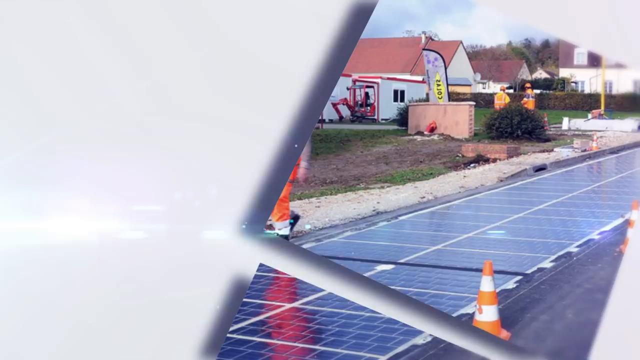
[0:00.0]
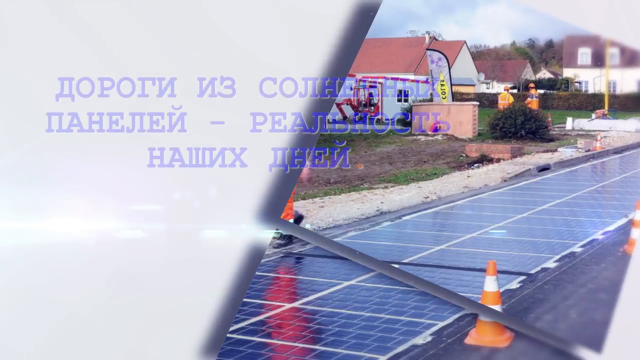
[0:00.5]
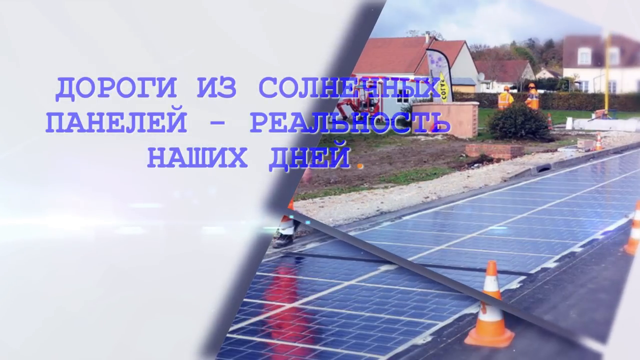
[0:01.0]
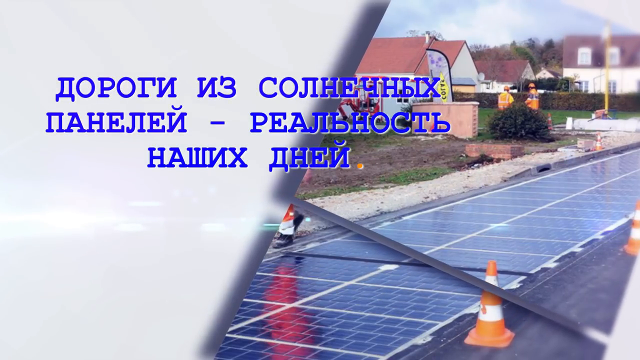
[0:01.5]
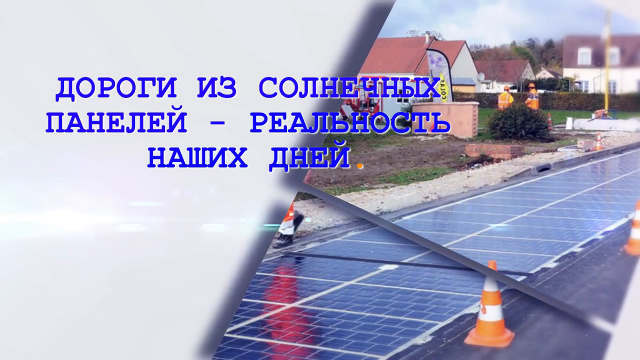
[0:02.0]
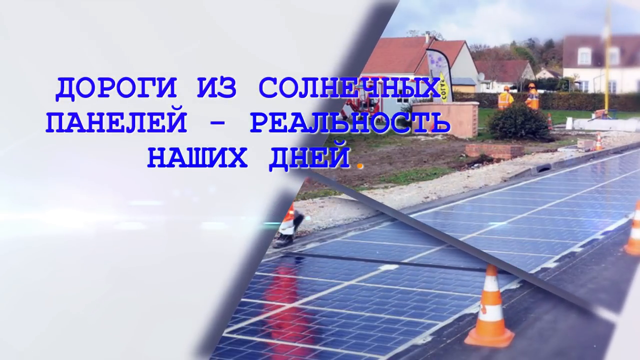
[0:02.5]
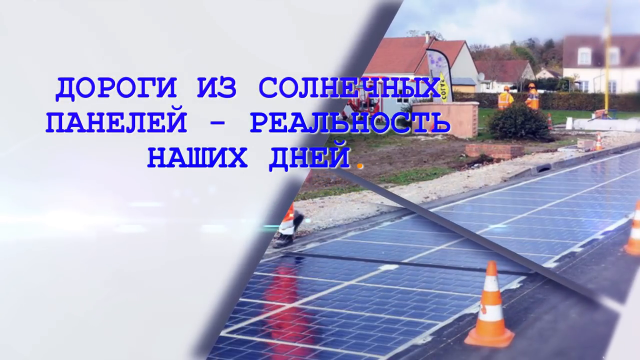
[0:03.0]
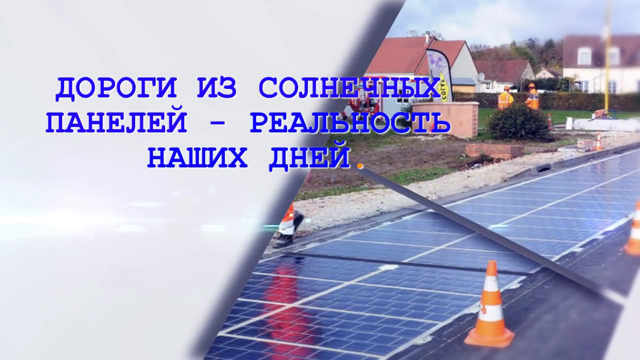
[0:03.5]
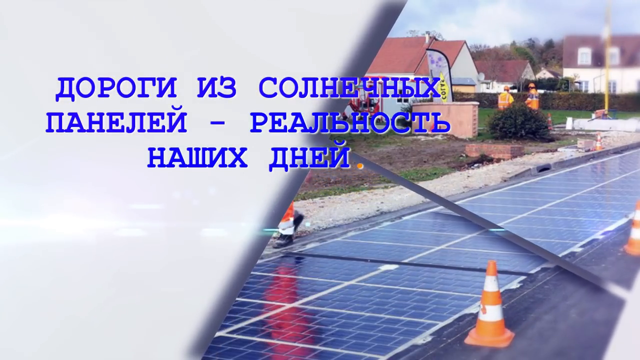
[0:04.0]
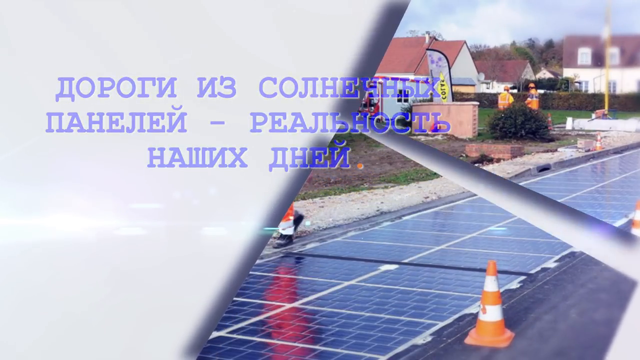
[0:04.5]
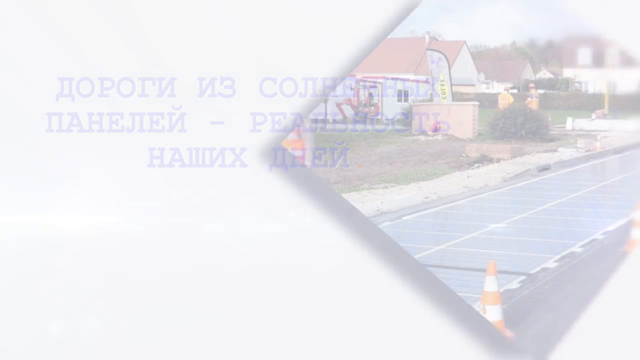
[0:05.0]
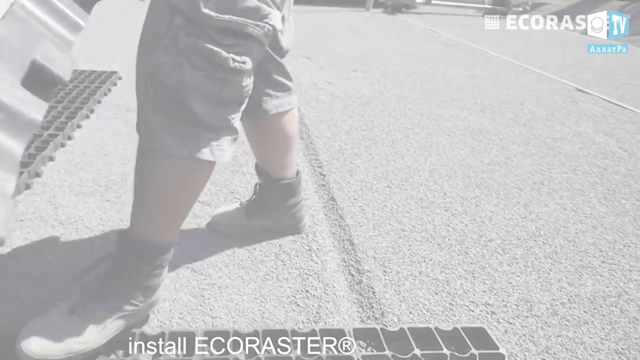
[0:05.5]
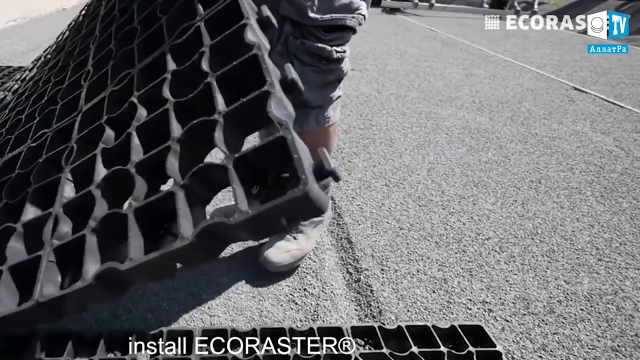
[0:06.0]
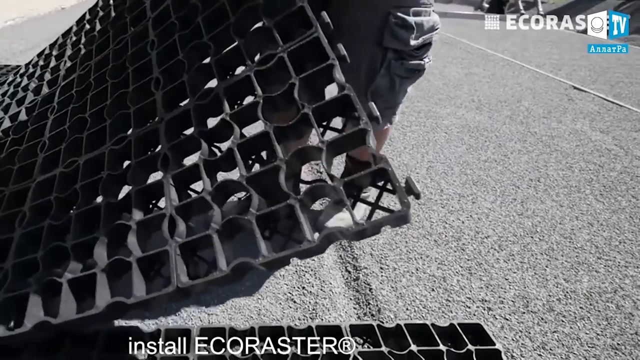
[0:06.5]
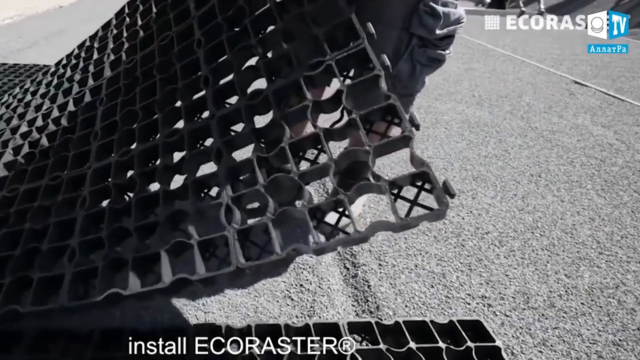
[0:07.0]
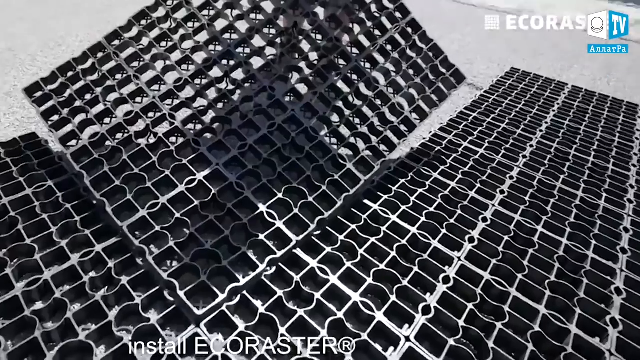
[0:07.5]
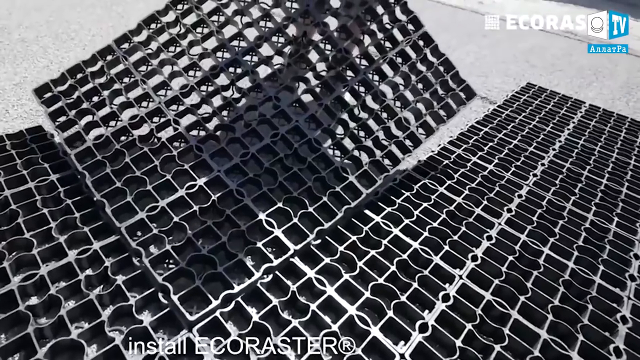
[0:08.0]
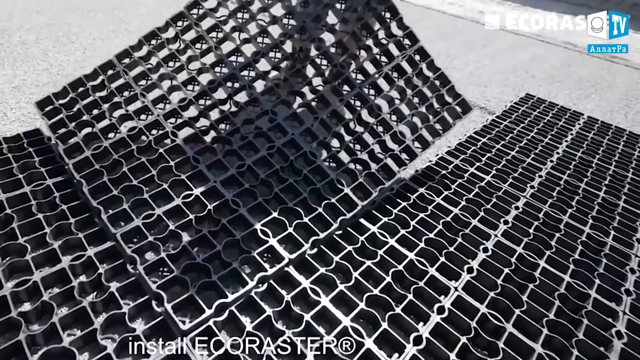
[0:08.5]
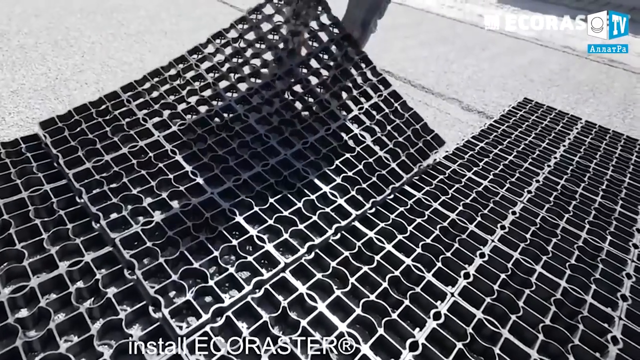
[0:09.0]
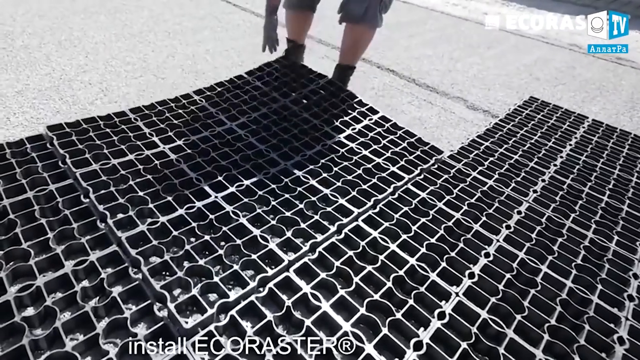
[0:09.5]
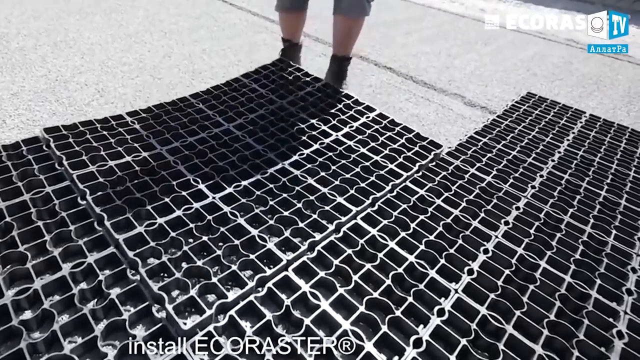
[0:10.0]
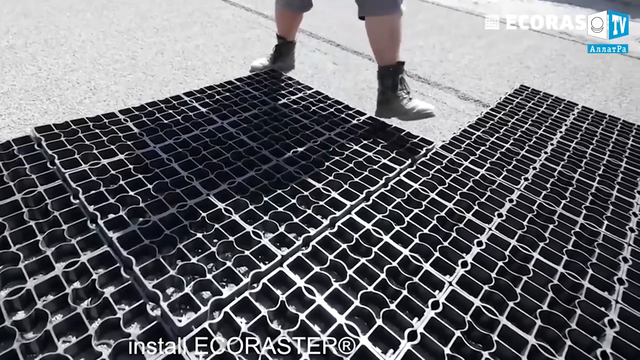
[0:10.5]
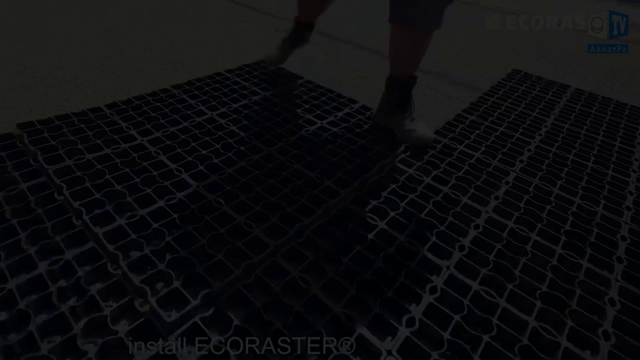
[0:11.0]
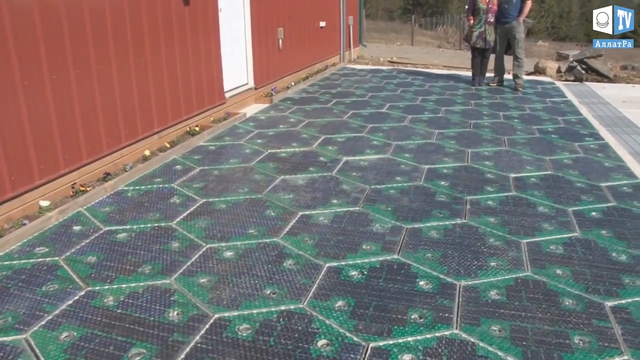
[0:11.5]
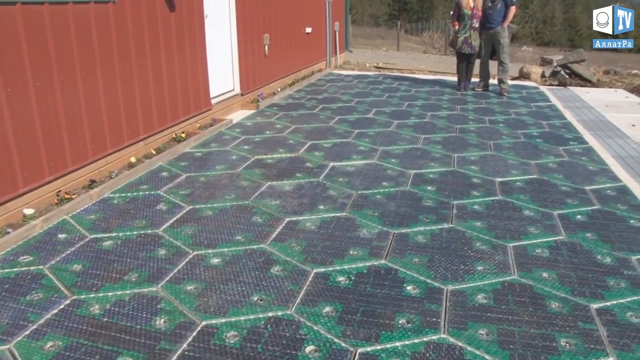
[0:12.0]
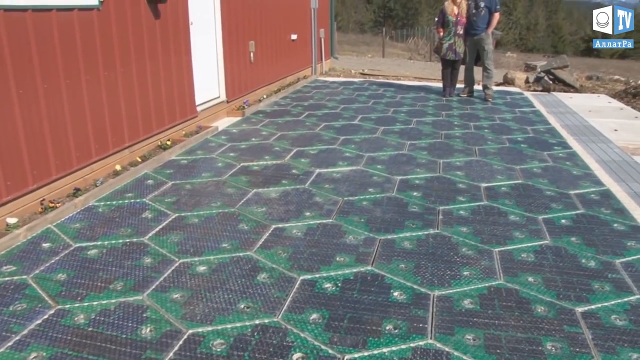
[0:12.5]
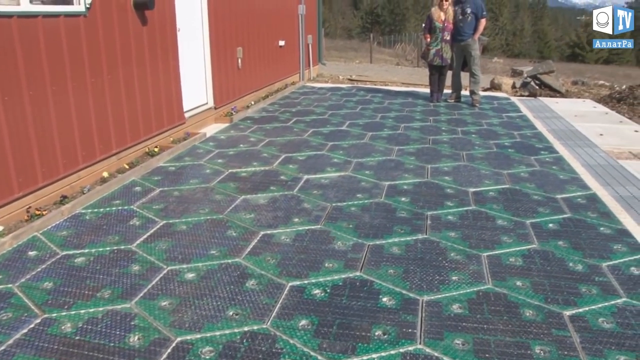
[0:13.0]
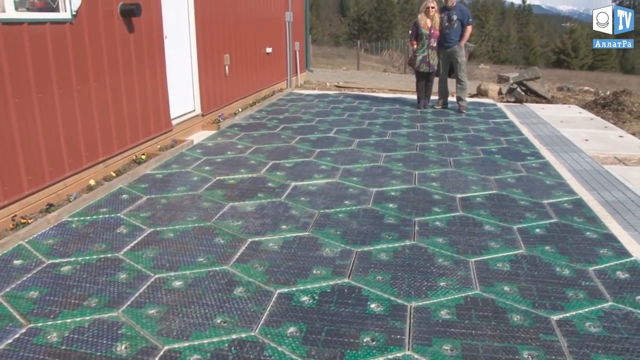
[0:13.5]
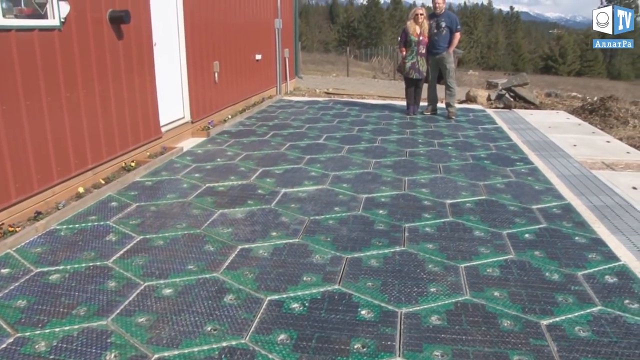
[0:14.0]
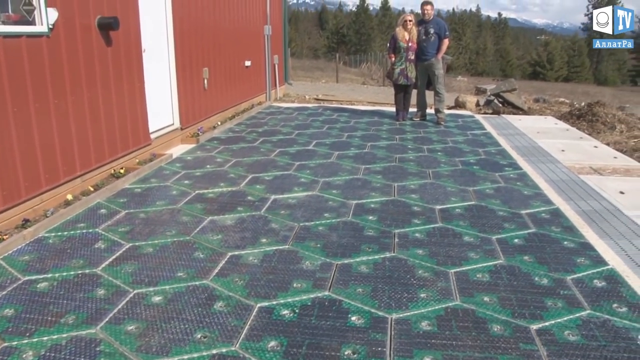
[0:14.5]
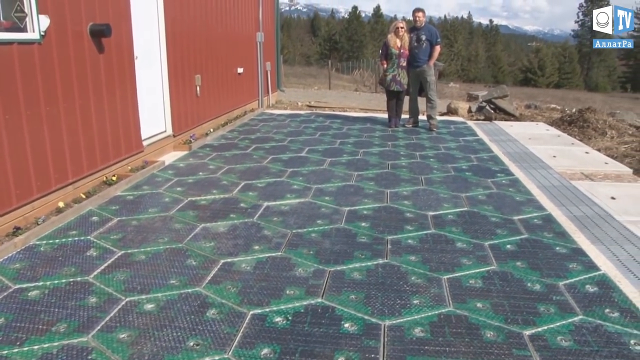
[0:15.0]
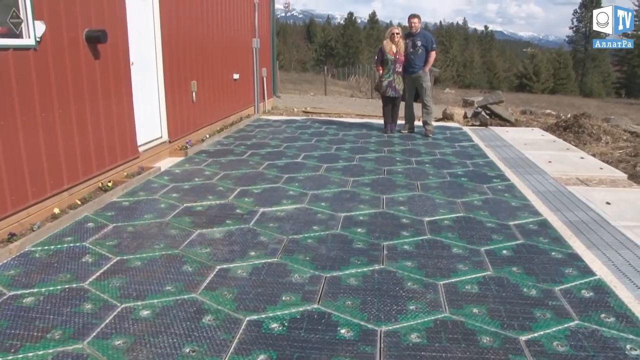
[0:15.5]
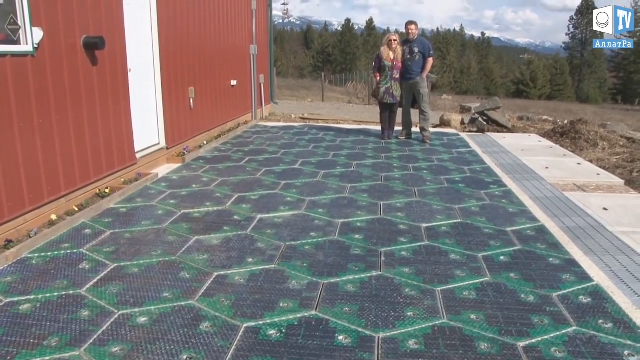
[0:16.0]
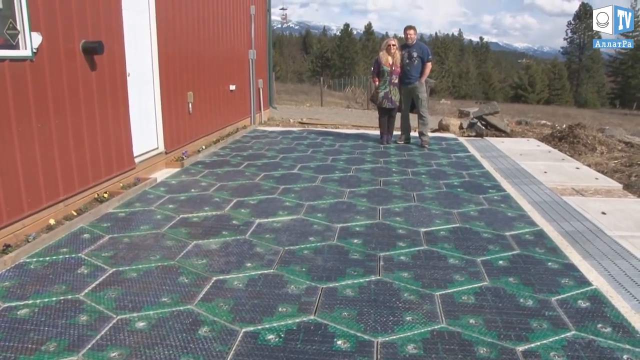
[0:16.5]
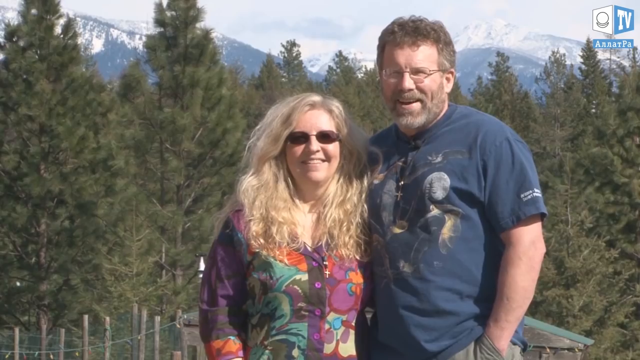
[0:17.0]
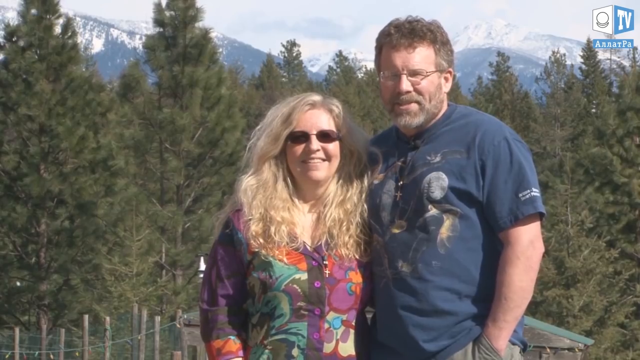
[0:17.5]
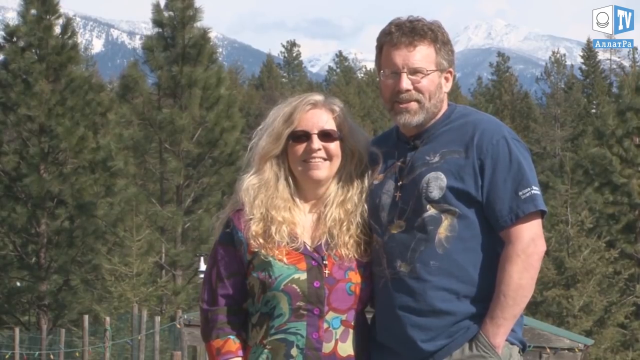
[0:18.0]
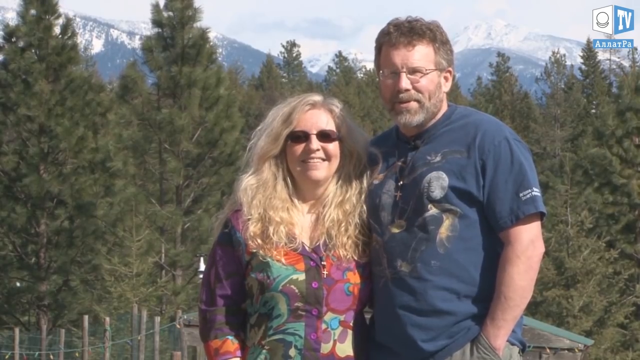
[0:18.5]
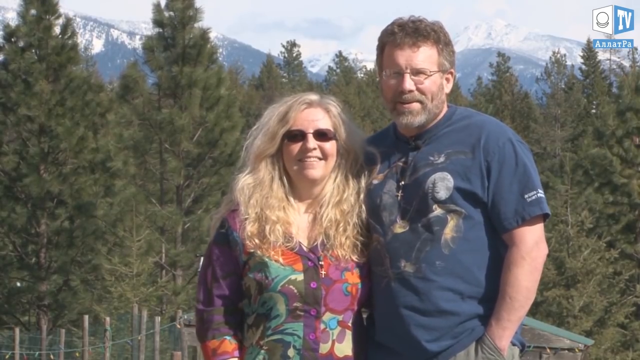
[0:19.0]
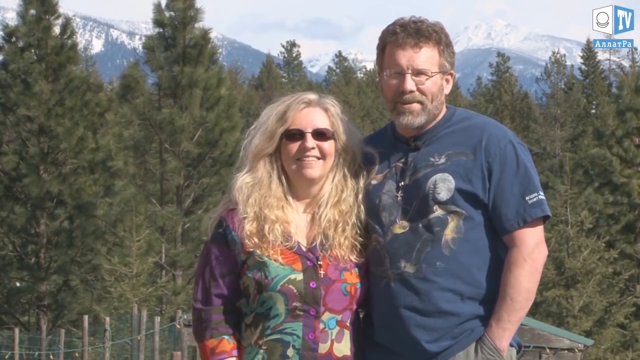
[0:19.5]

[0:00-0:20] An outdoor area appears, which takes place in a neighborhood. A man moves a black mat with little boxes inside it. Two people stand in front of a big green mat, and next to a red-like house there are two people standing, a man and a woman. There is a blue mat with a white line across it, kind of like something someone would maybe walk across. Off to the side is a house with a red roof, painted white. There are orange cones with lines in the middle, two of which cross each other. A white trailer is in the background. Text in a different language is written in blue bubble letters. The man is then shown walking and laying the mats down; there are about four of these mats. He wears big black high-top work boots, and the shot shows just his feet.